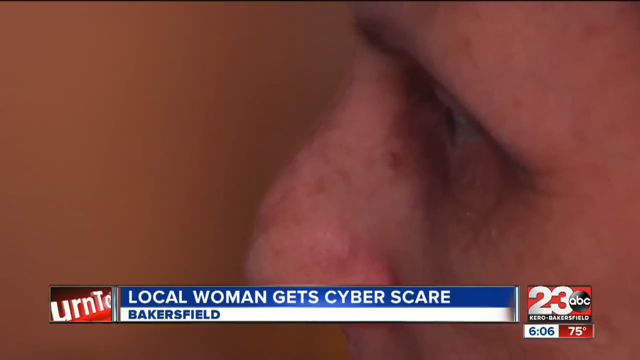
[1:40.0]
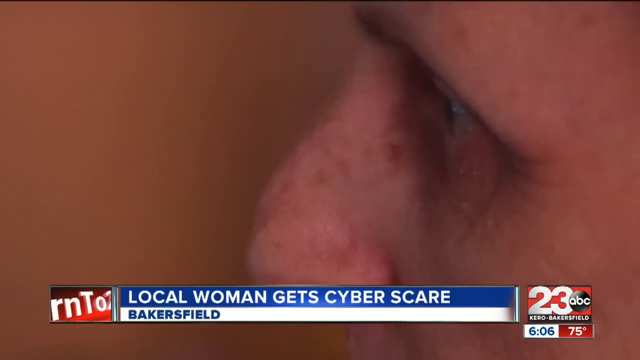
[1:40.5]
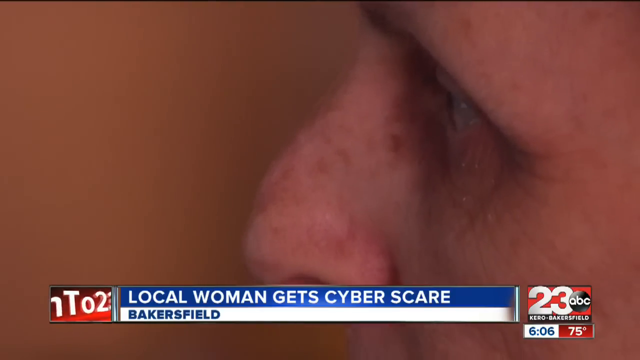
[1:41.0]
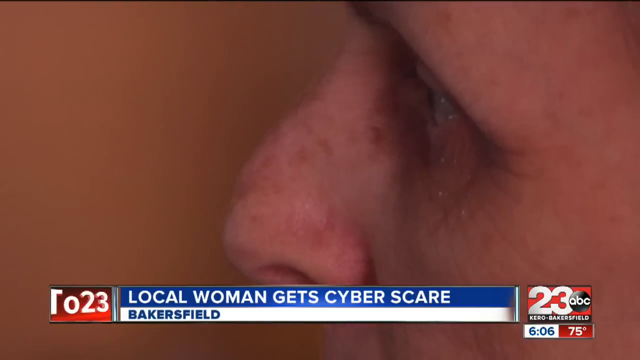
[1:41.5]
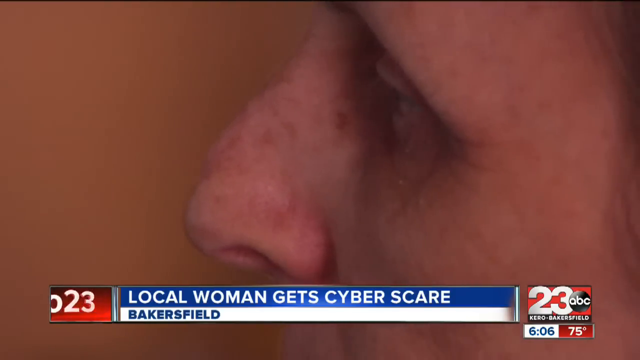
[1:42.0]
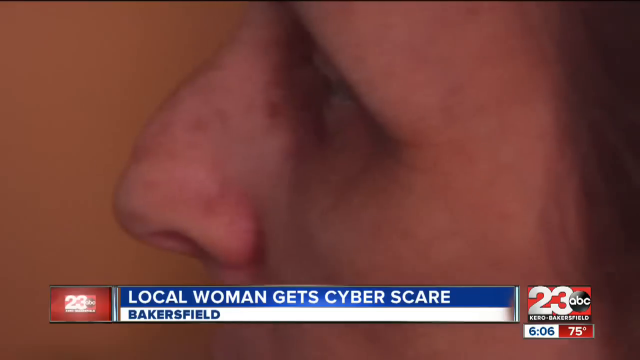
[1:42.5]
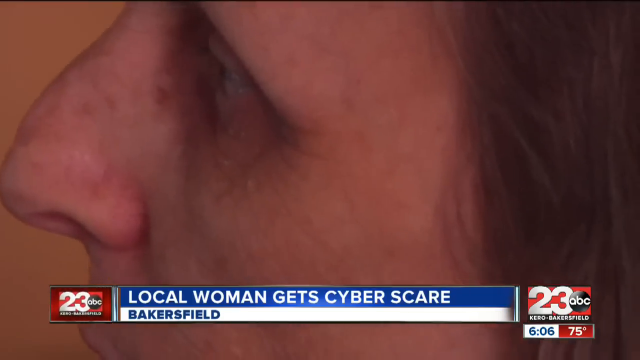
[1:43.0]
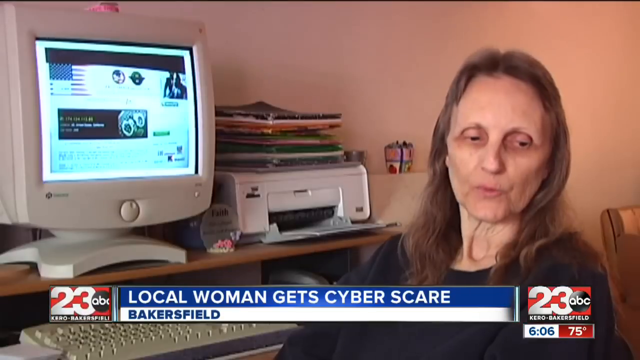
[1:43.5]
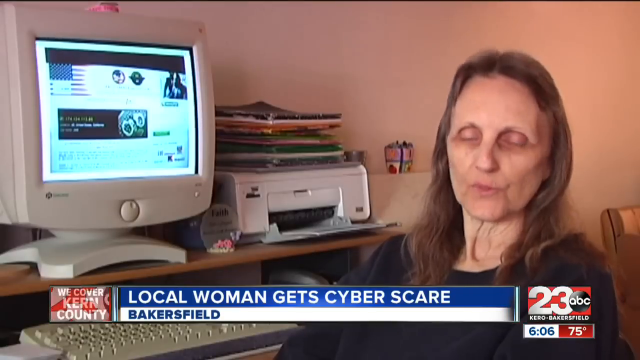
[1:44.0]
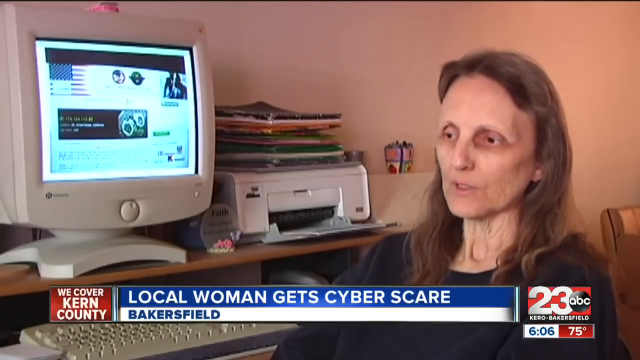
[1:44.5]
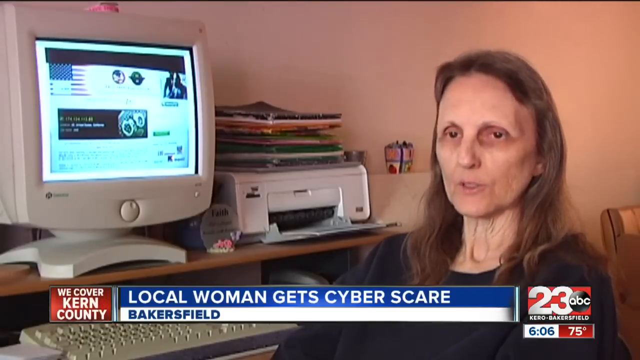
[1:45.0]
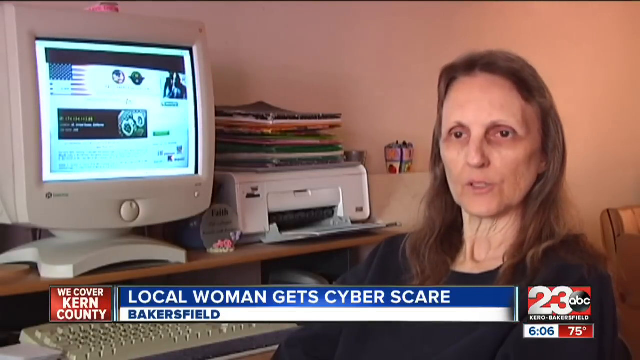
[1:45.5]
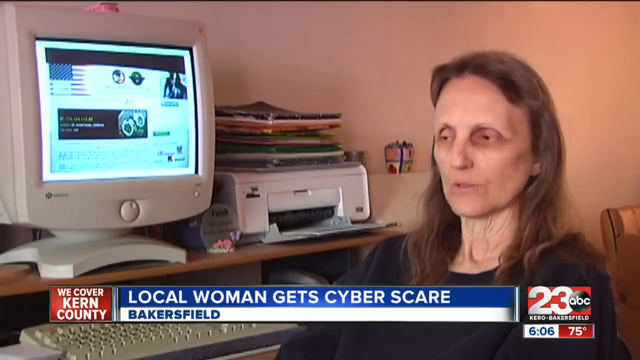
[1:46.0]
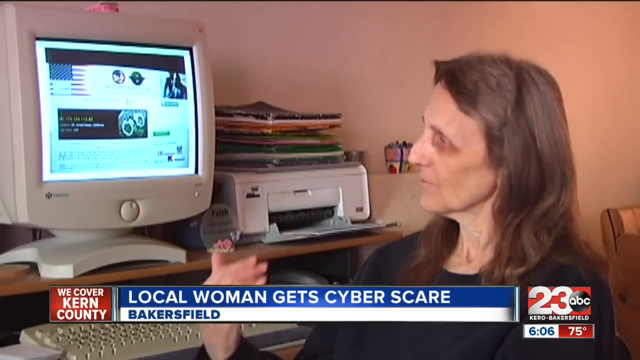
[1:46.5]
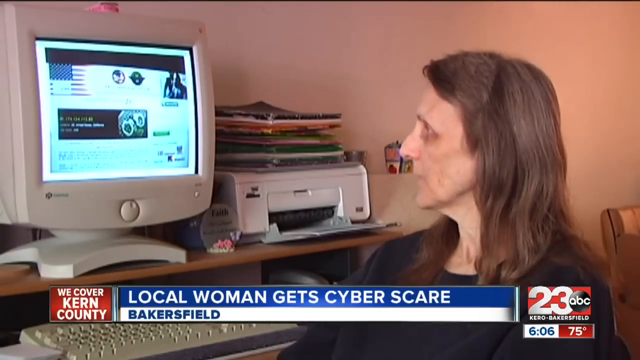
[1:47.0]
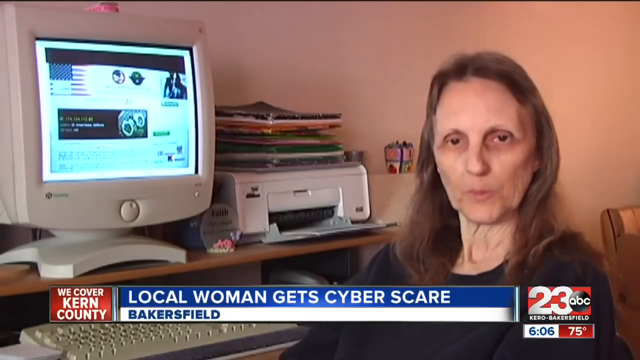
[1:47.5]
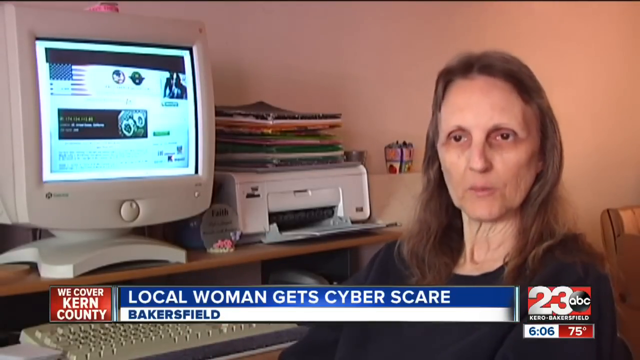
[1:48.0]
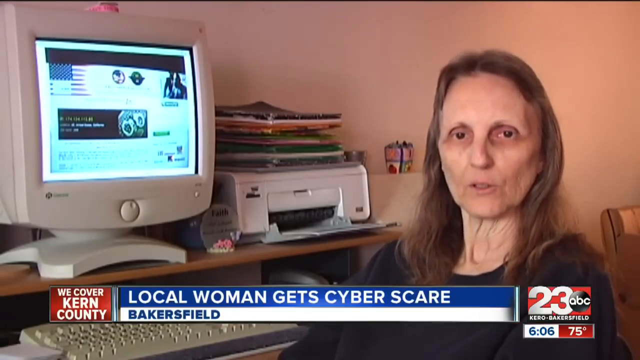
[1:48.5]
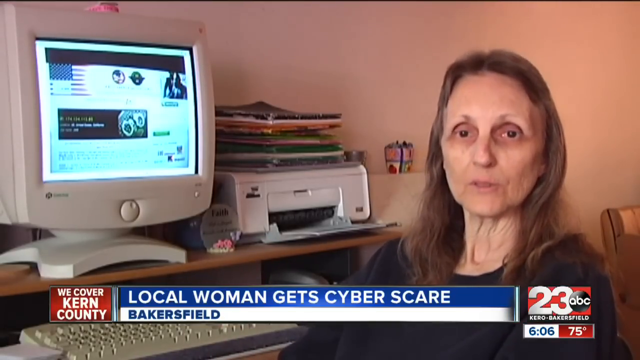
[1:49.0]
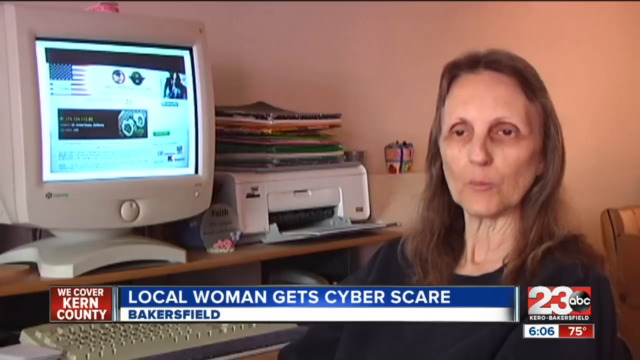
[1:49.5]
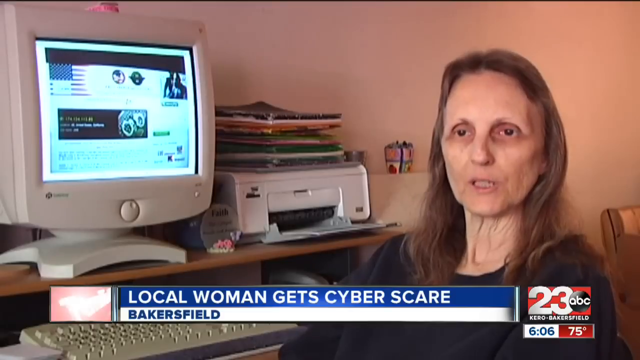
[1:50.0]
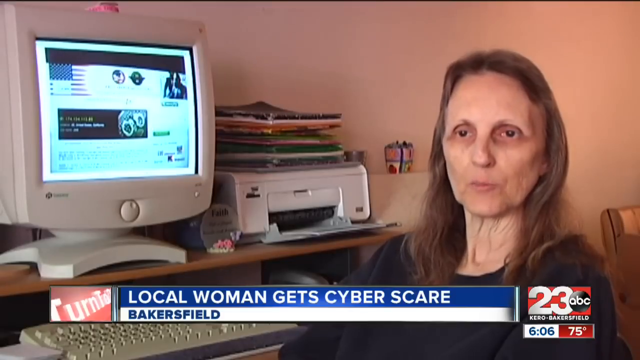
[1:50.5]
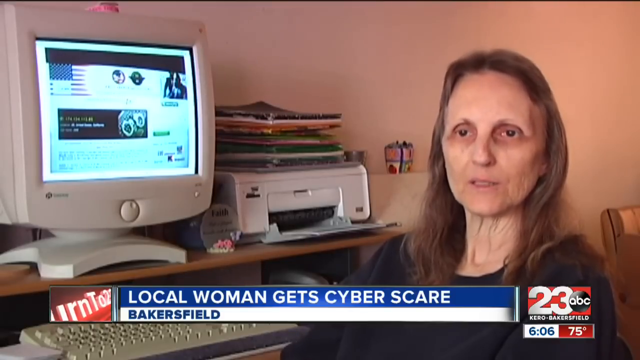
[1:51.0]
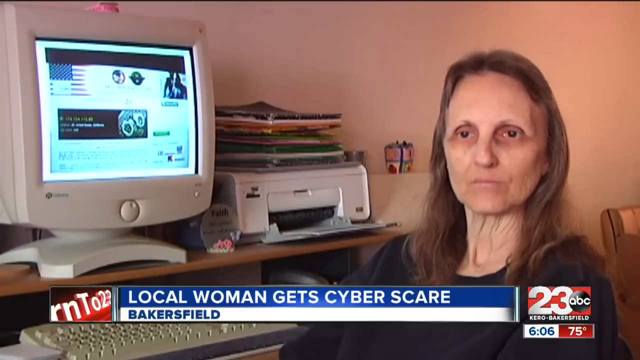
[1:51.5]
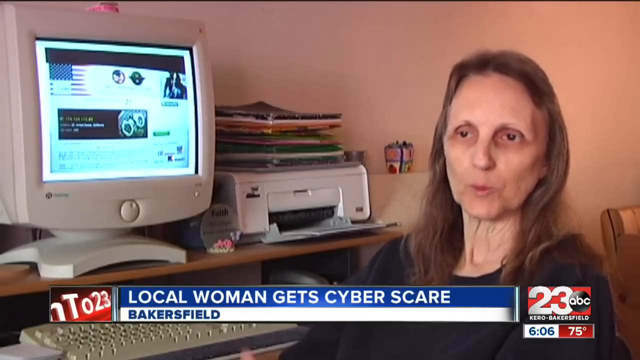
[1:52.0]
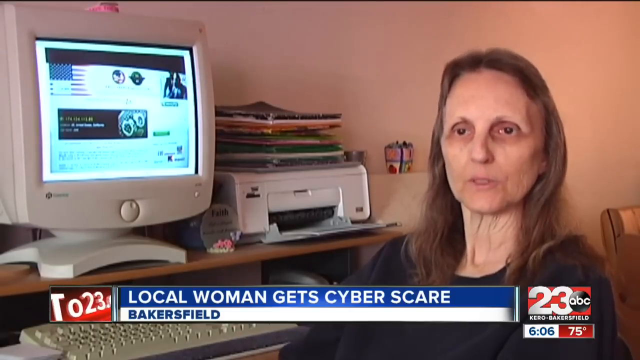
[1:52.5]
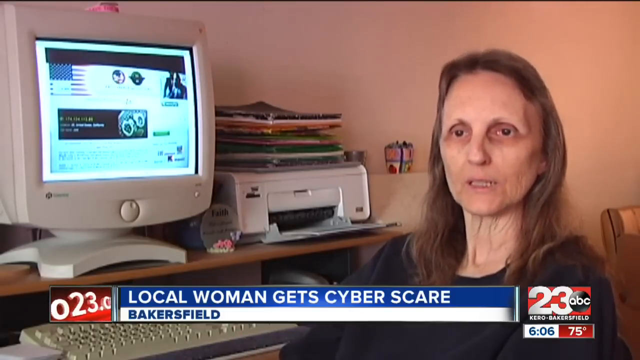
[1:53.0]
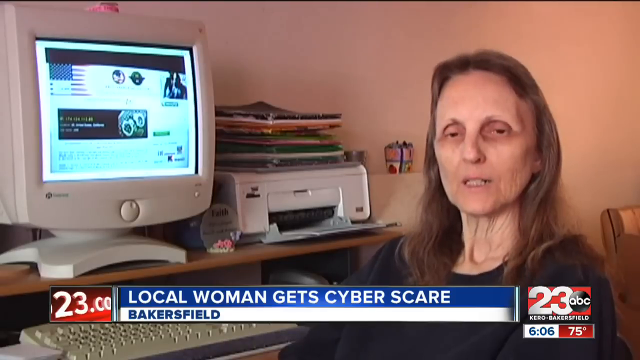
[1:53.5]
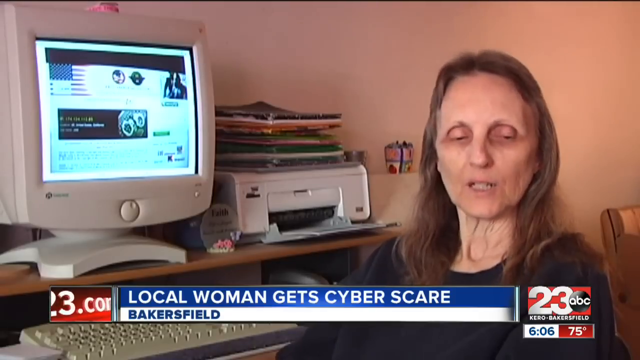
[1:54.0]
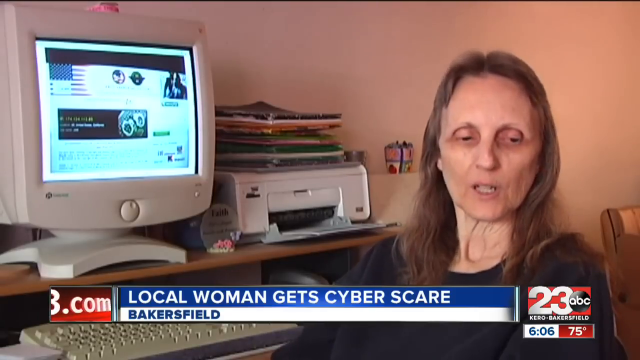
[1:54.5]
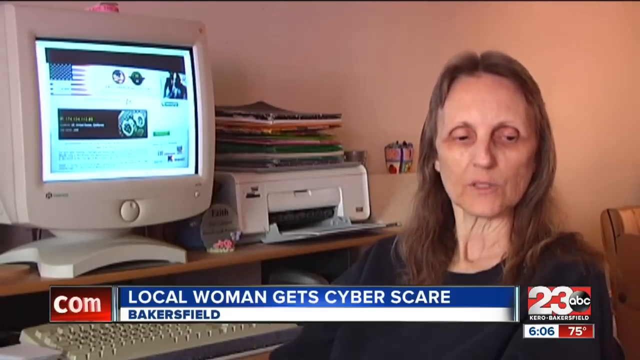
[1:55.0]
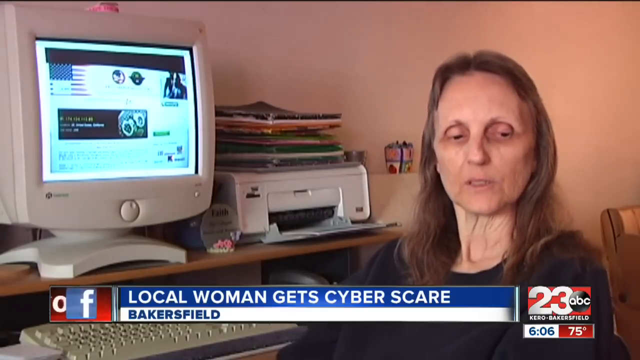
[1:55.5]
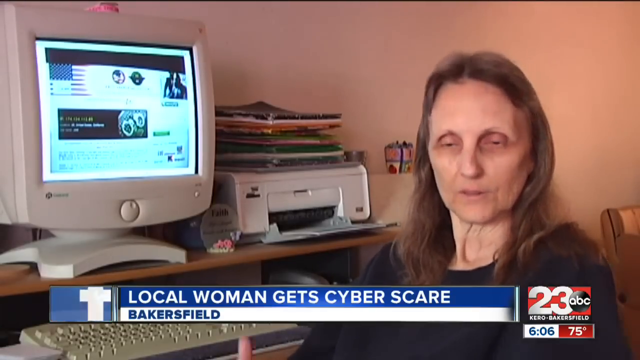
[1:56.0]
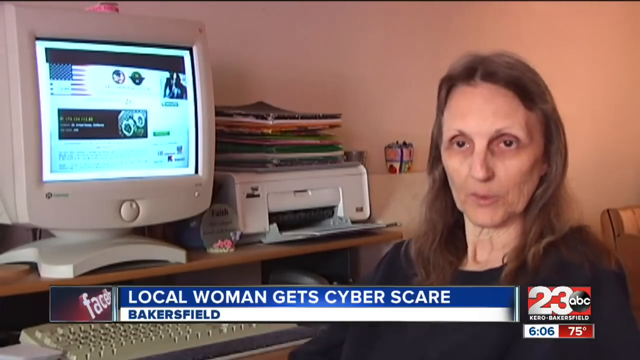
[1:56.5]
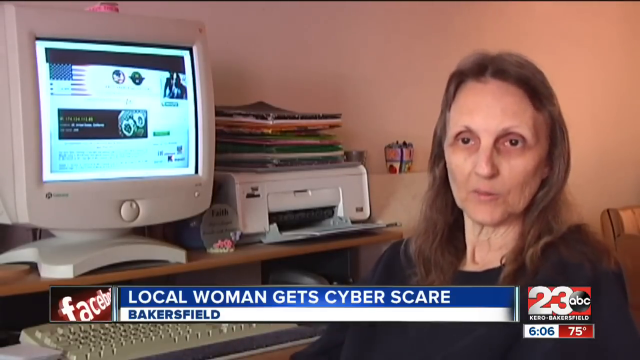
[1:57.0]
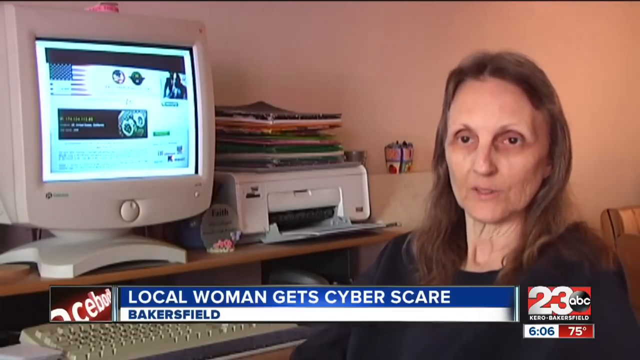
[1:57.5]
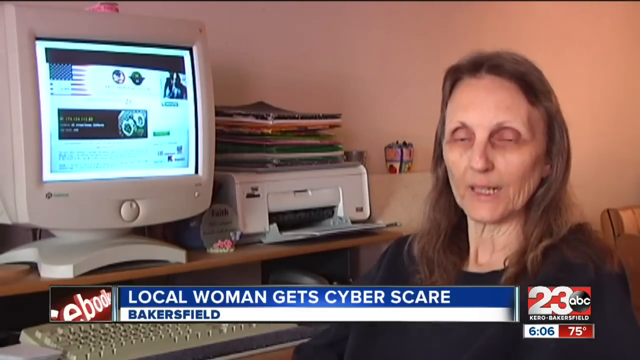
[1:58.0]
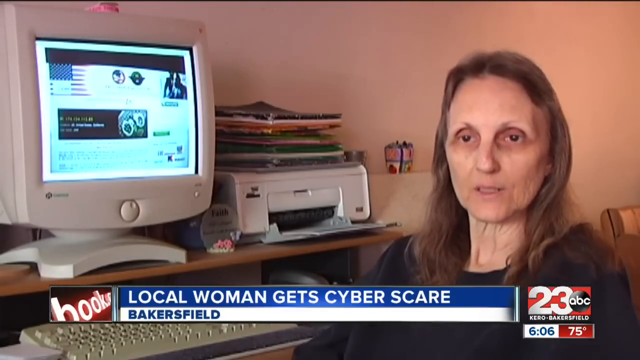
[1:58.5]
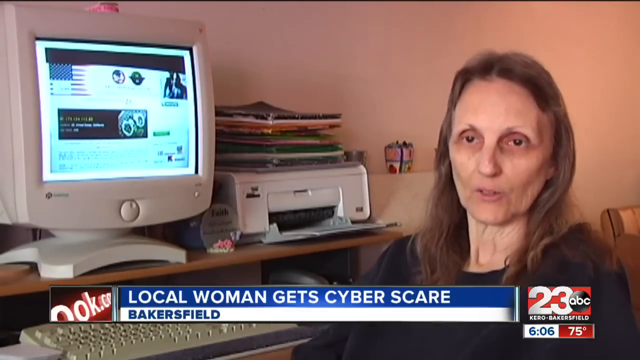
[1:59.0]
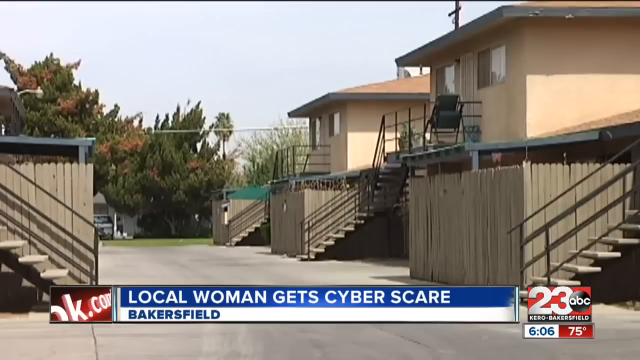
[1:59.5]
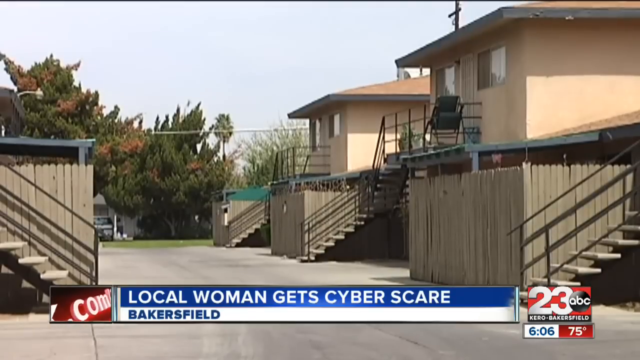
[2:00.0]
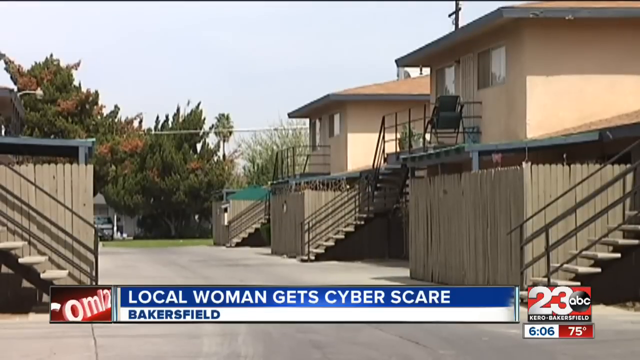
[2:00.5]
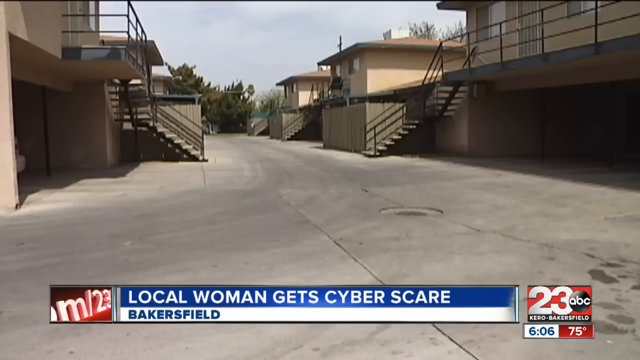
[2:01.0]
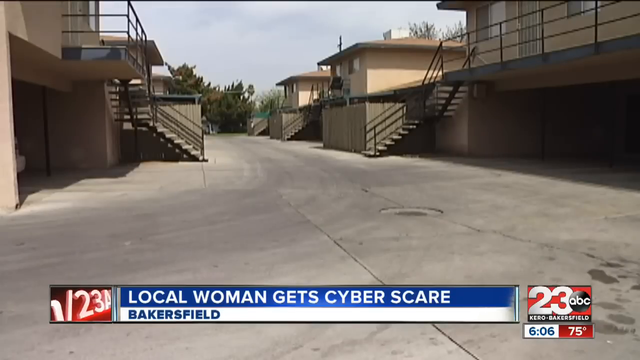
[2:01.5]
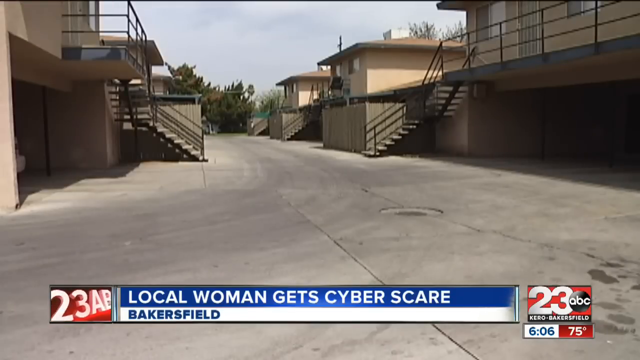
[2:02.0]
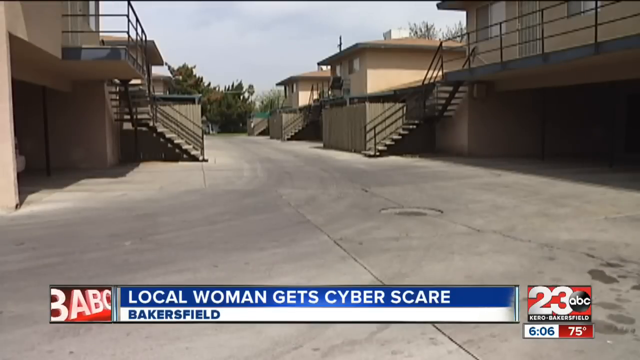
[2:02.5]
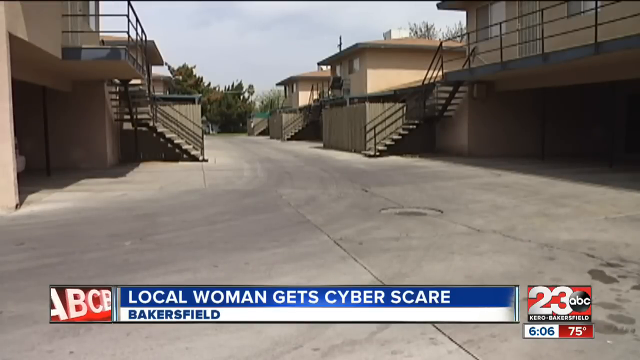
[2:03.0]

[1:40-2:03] The News Channel 23 ABC Kero and Bakersfield information is at the bottom right of the screen, with the time, 6:06, underneath and the temperature, 75, to its right. The headline reads "Local woman gets cyber scare," with "Bakersfield" underneath. At her apartment, the shot is a close-up of the woman and her computer screen, and the lower left-hand corner reads "We cover Kern County." The woman being interviewed is probably in her early 60s, with dark hair and dark eyes, and wears a black top.